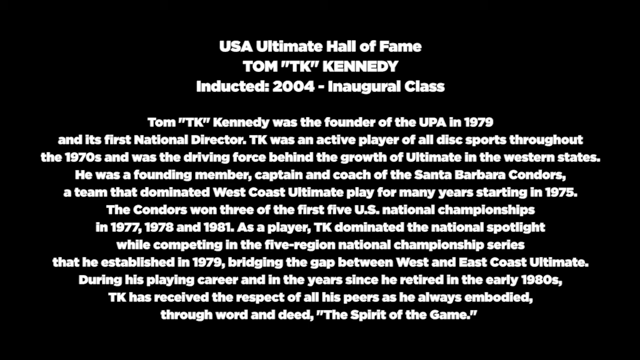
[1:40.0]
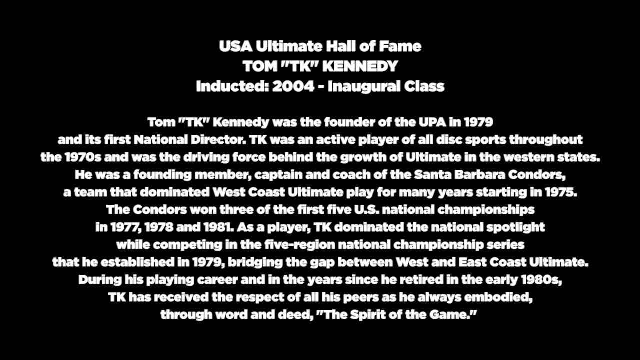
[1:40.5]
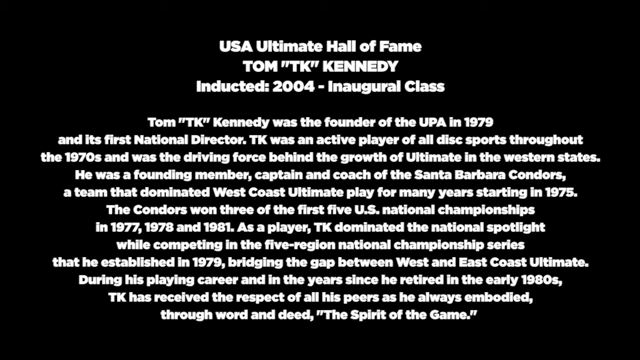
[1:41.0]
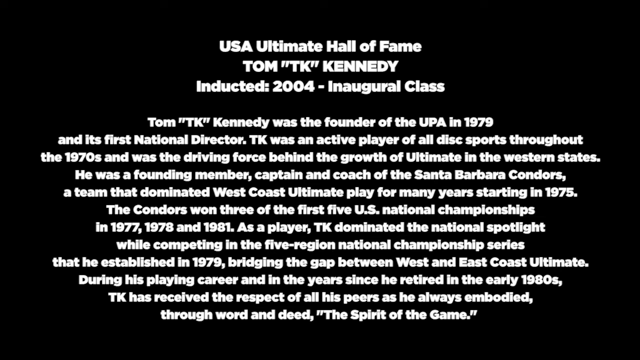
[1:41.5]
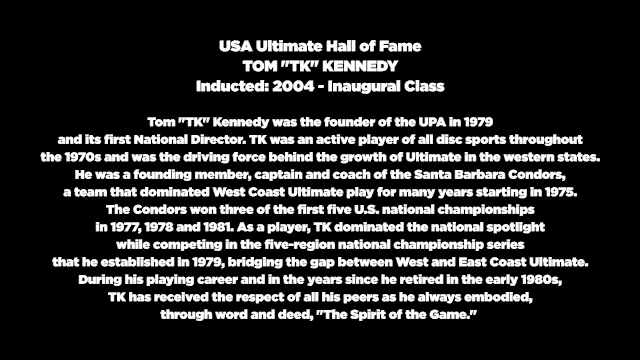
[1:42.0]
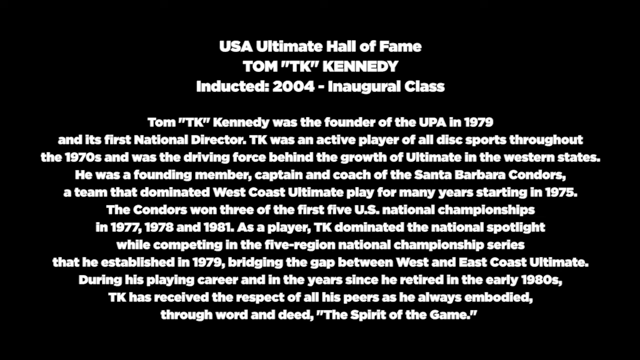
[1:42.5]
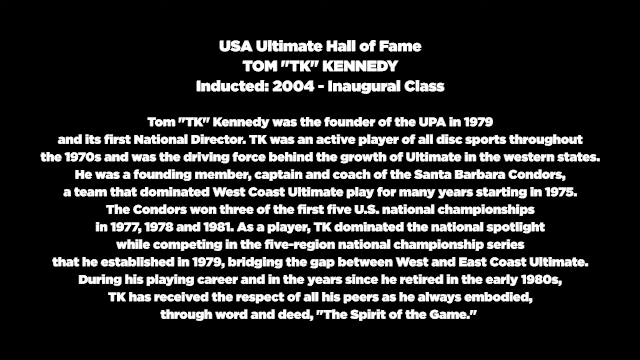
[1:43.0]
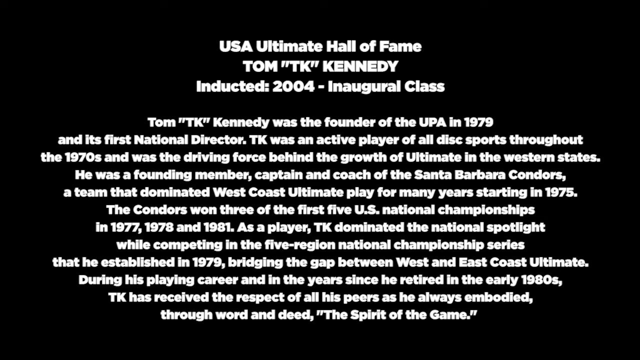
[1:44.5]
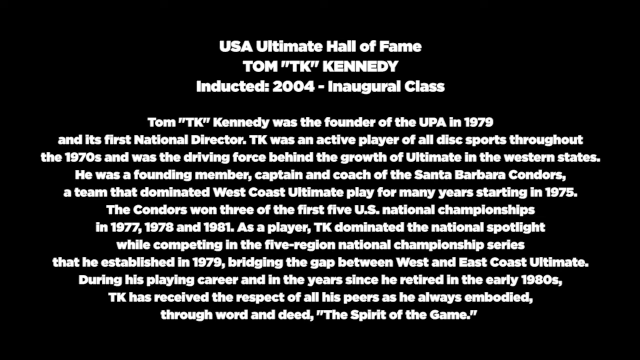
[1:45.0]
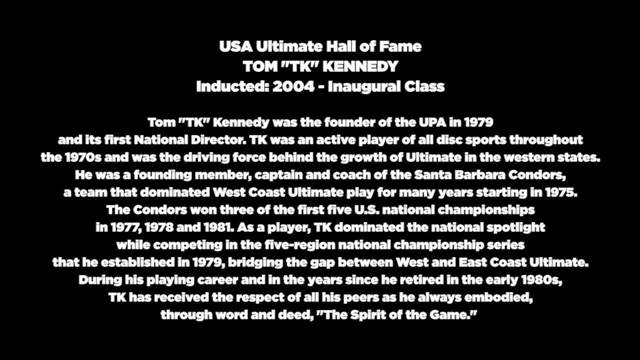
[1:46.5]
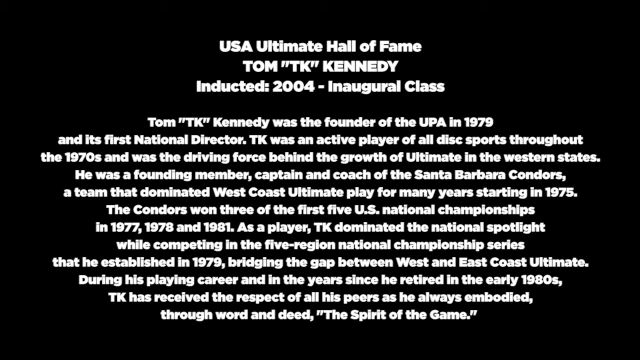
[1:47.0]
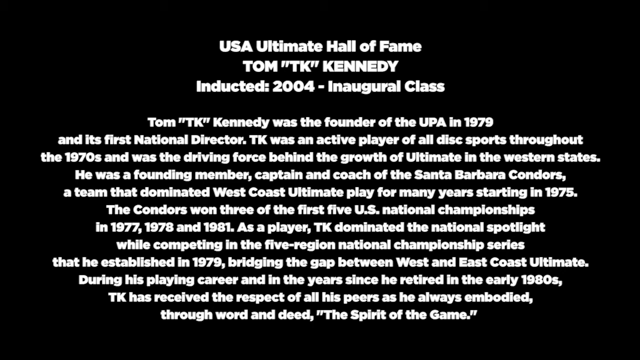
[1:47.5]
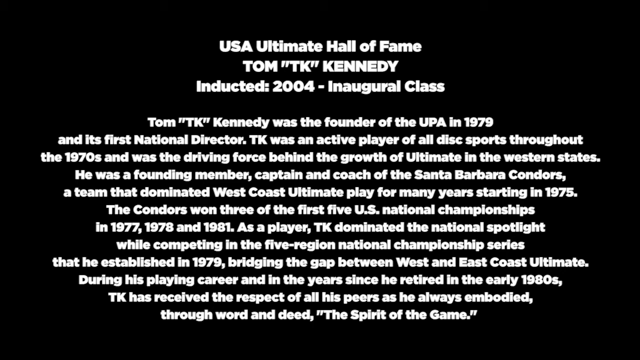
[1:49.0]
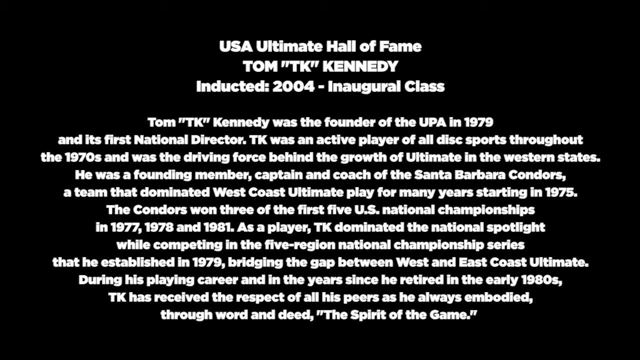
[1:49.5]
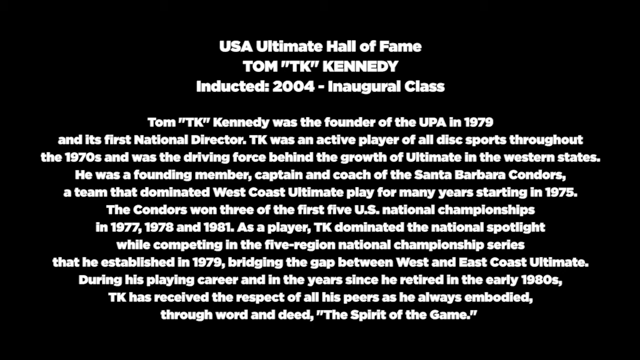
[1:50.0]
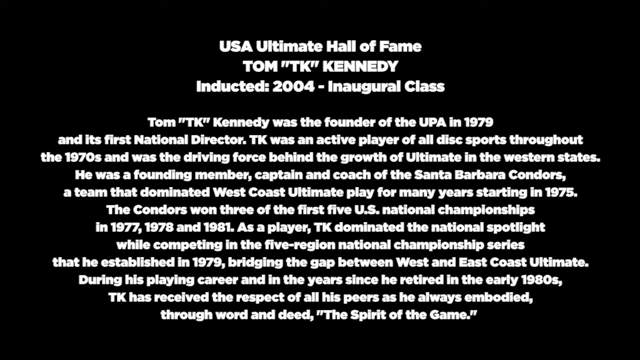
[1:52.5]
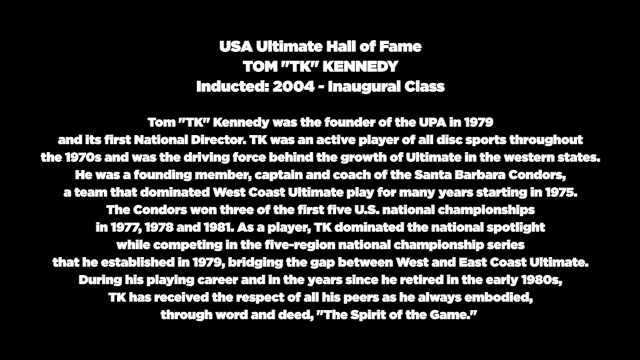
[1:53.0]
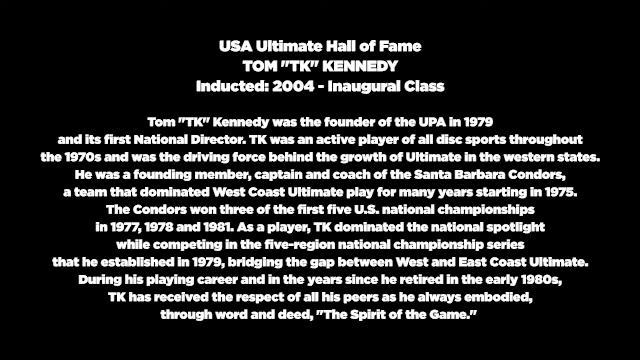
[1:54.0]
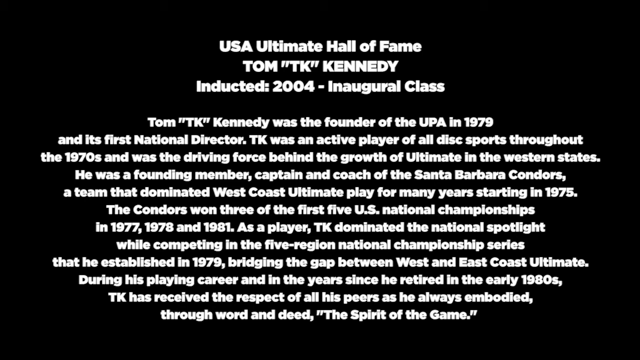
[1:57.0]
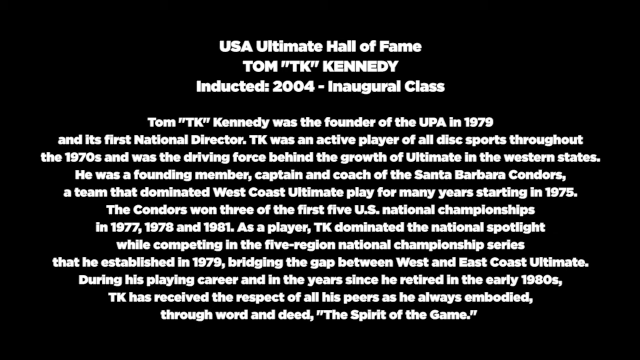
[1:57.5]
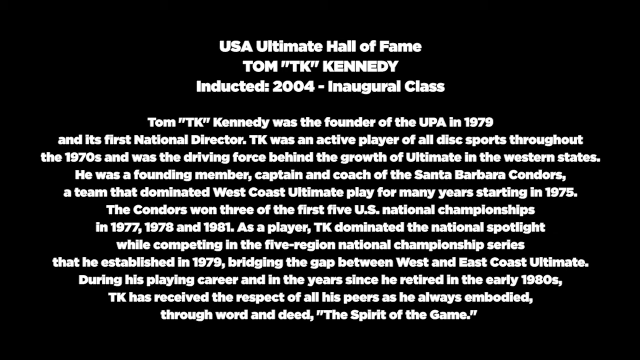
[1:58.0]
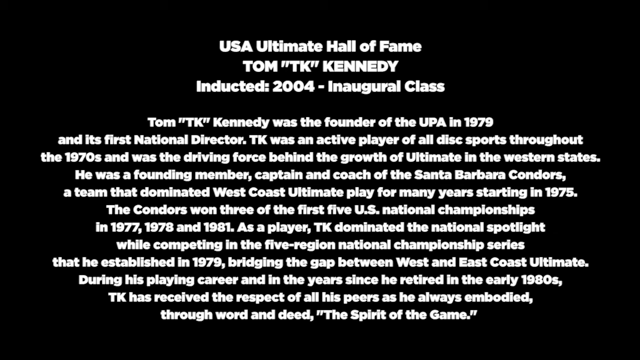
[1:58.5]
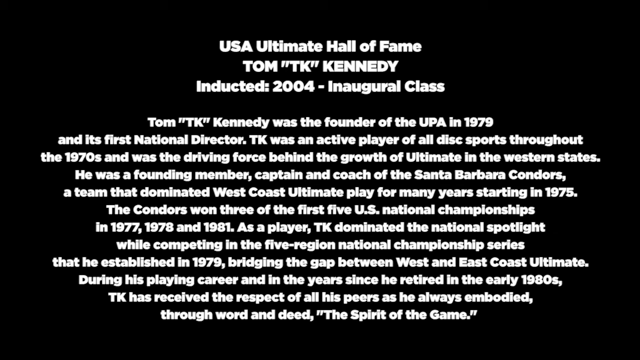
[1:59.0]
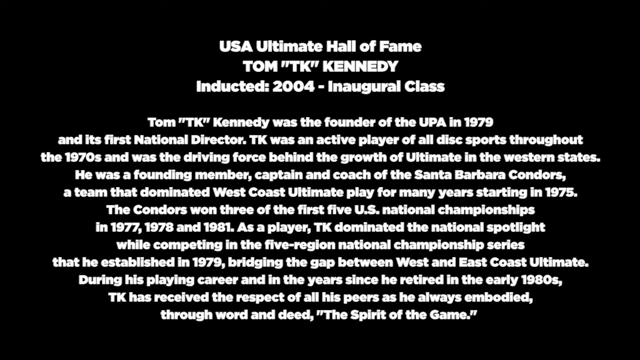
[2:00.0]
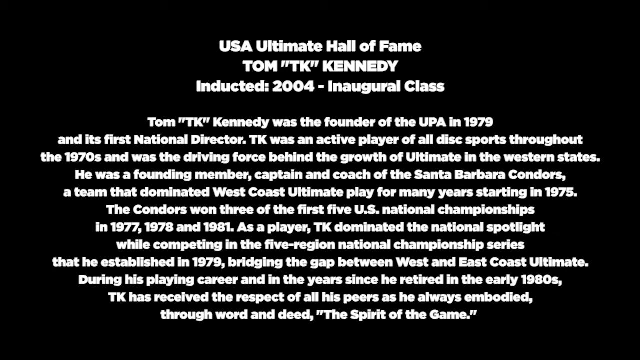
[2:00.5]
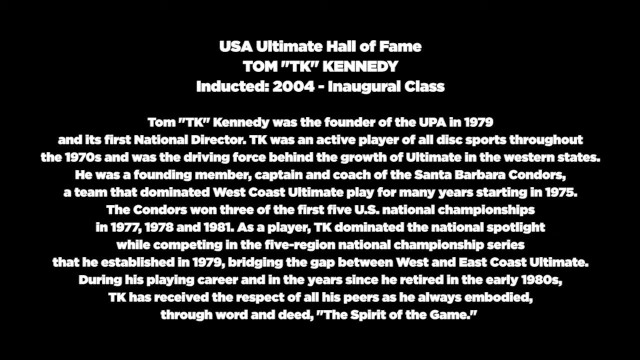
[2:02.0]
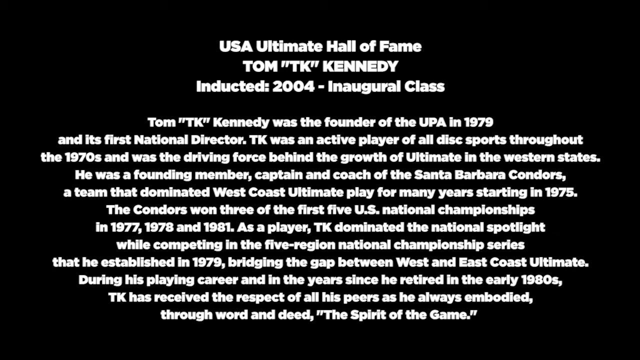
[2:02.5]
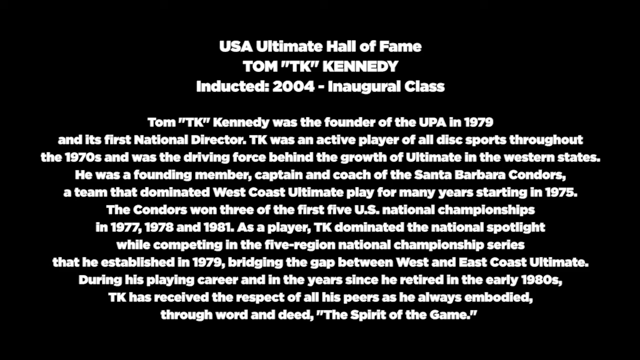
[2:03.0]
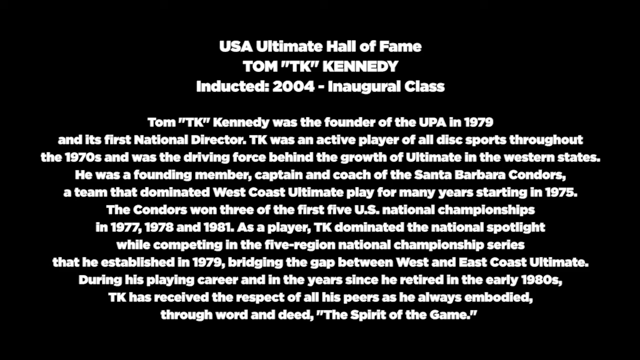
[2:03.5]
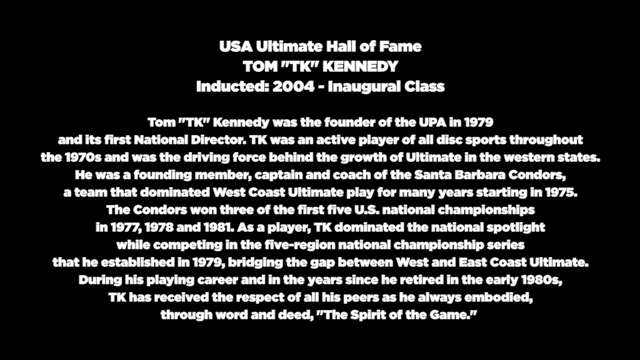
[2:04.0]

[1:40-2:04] A black screen appears with white text reading "USA Ultimate Hall of Fame", "Tom T.K. Kennedy" and "2004 Inaugural Class", followed by: "Tom T.K. Kennedy was the founder of the UPA in 1979 and its first national director." The text continues that T.K. "was the driving force behind the growth of Ultimate in the Western states. He was a founding member, captain, and coach of the Santa Barbara Condors, a team that dominated West Coast Ultimate play for many years, starting in 1975. The Condors won three of the first five U.S. national championships in 1977, 1978, and 1981. As a player, T.K. dominated the national spotlight while competing in the five-region National Championship Series that he established in 1979, bridging the gap between West and East Coast Ultimate. During his playing career and in the years since he retired in the early 1980s, T.K. has received the respect of all of his peers".